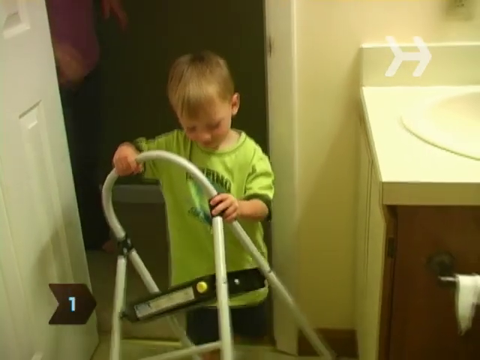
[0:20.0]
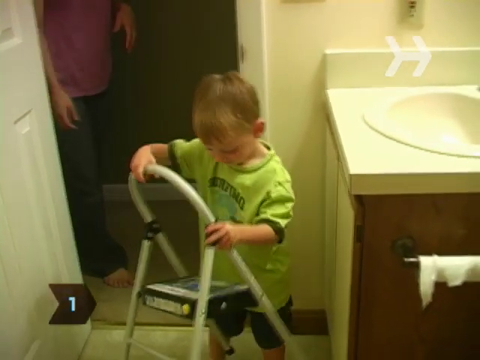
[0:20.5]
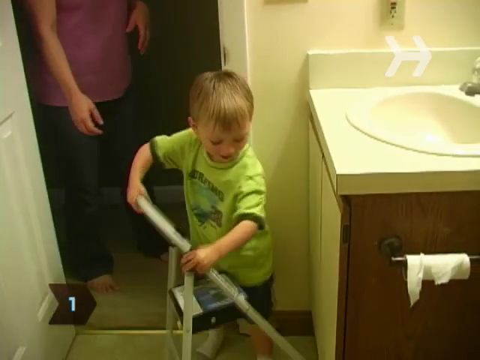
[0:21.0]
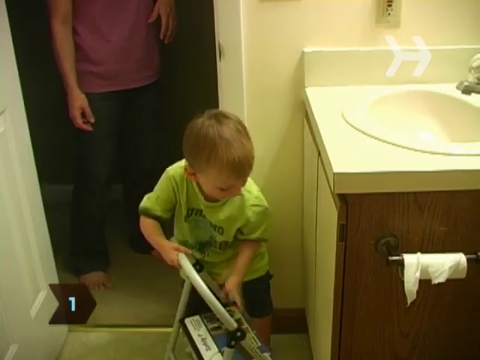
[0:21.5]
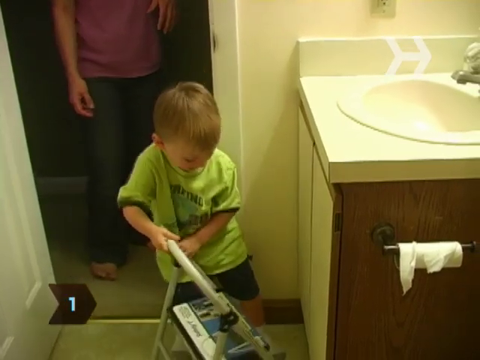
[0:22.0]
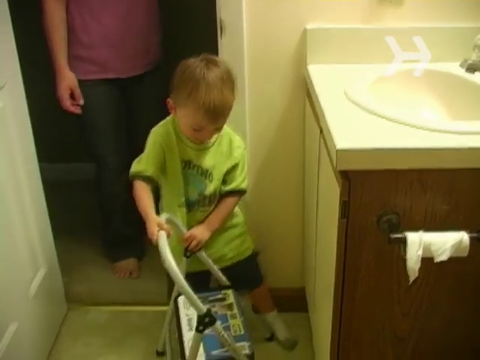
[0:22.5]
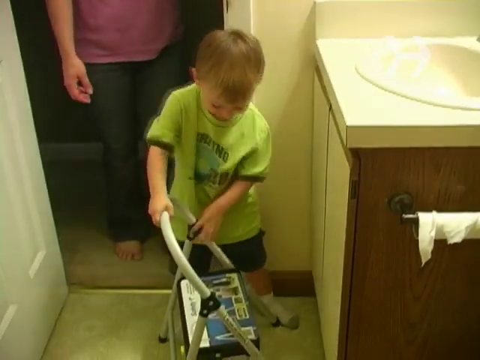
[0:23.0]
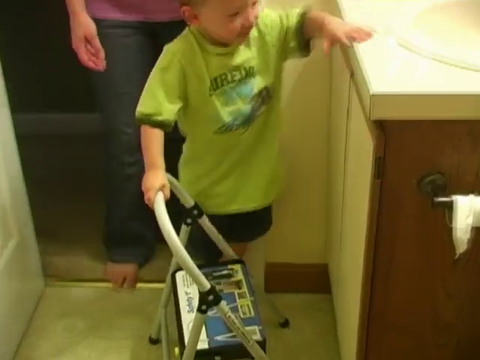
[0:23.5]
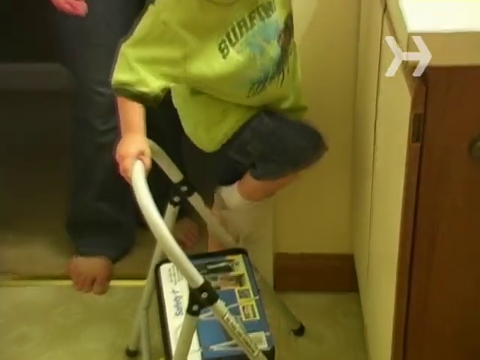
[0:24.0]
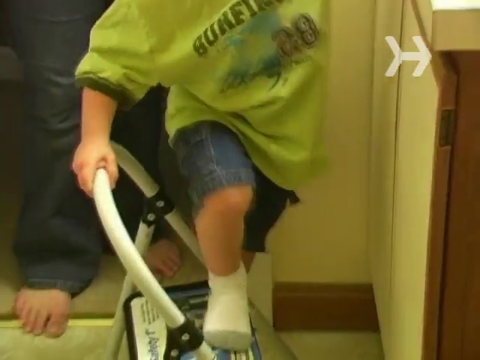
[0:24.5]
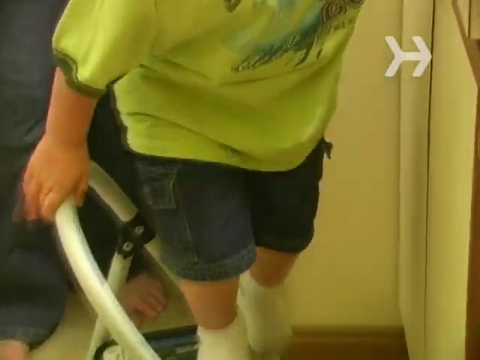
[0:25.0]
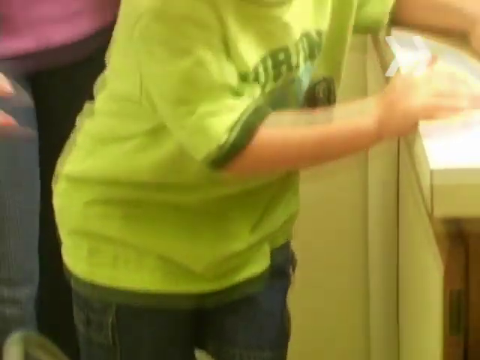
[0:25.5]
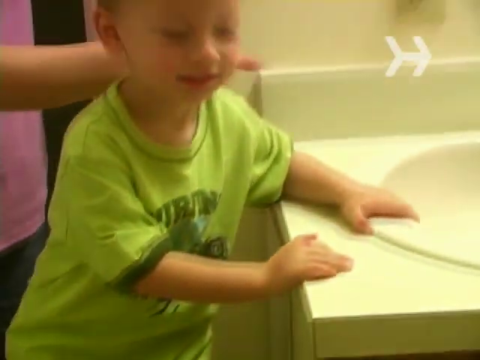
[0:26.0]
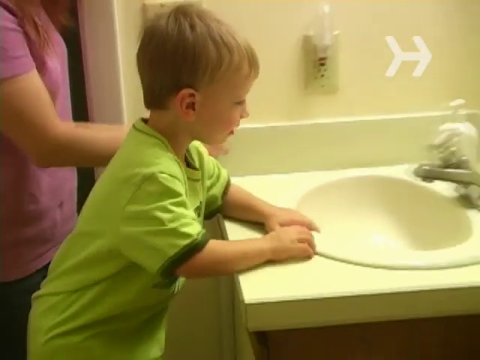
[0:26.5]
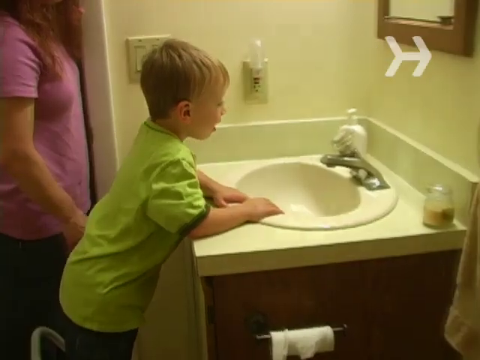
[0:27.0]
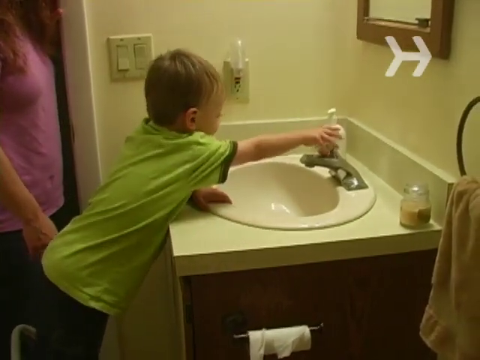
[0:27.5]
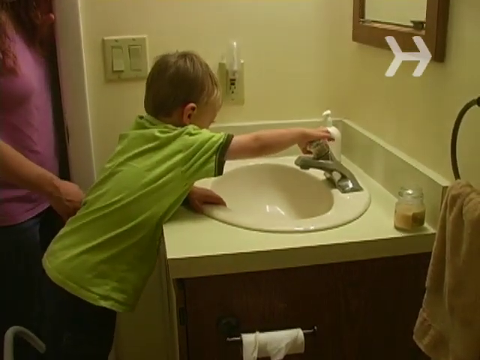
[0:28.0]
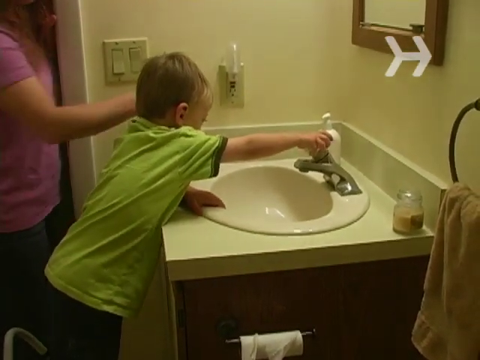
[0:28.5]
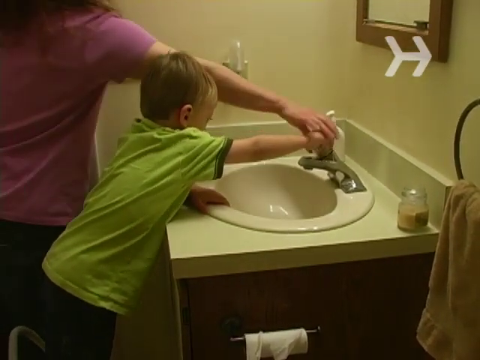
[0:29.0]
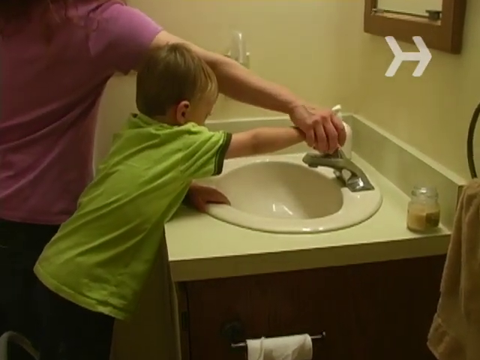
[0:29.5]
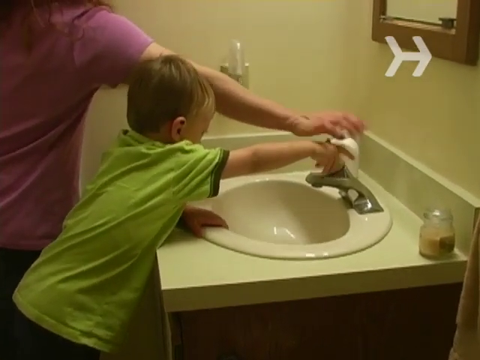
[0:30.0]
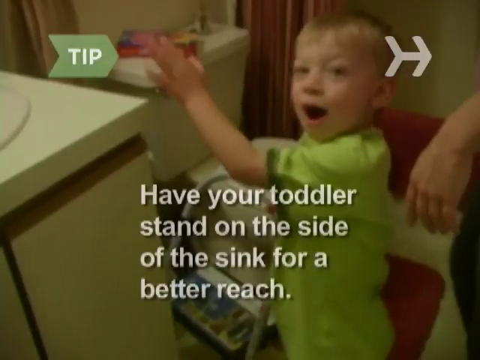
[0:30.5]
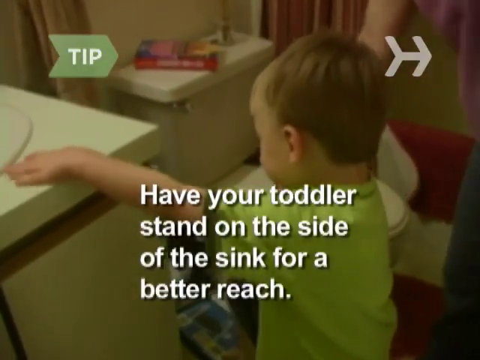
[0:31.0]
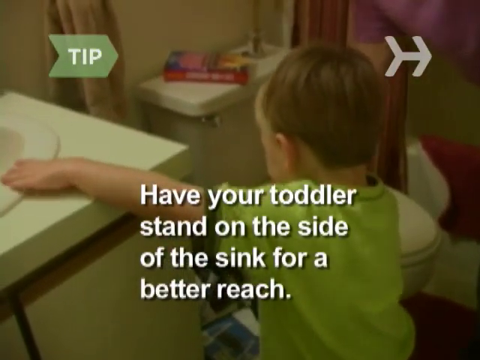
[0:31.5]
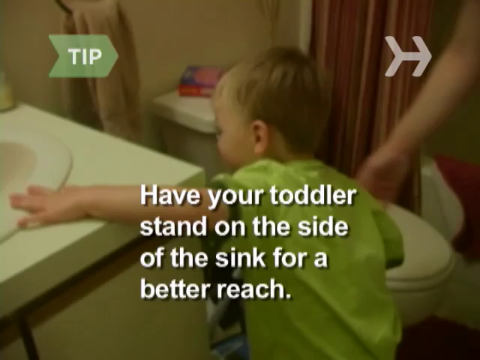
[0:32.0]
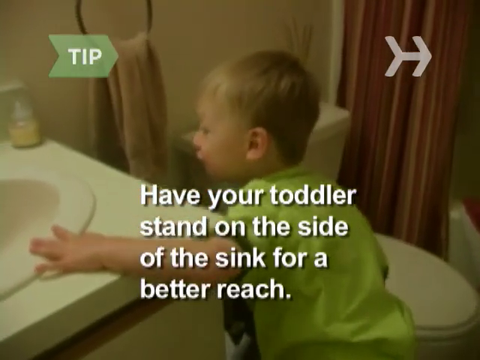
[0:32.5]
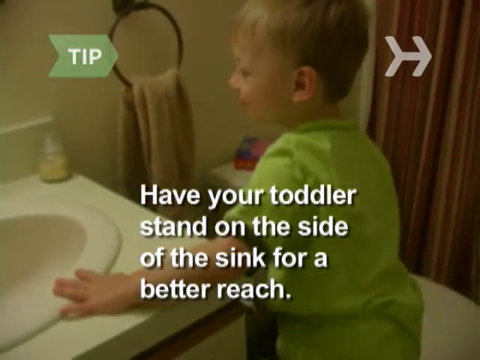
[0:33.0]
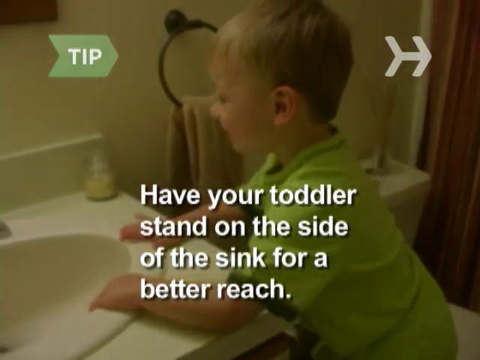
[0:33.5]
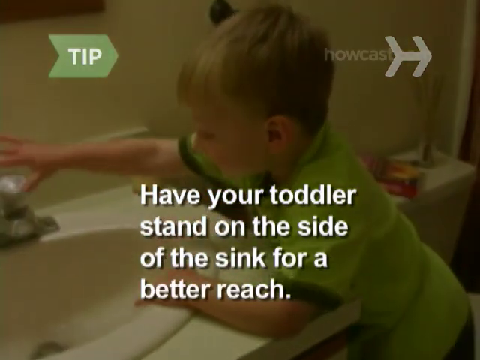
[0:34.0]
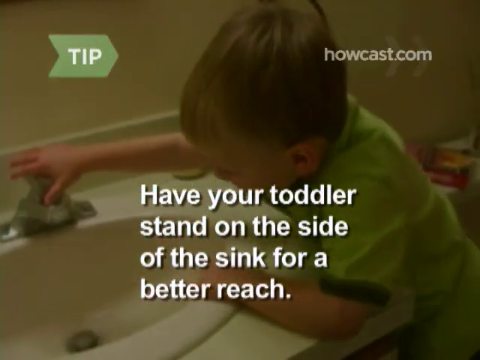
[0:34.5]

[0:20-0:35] The child walks up, puts the step stool in front of the sink, and reaches out trying to turn the water on. The faucet has a single twist-pull hot and cold control: a sort of crystal-looking plastic knob in the center that is pulled out and then twisted to alter the heat. The child has difficulty with it, and the mother's hand reaches in and points to get him to start. She wears a pink shirt and he wears a green t-shirt. He cannot reach, partly because the stool is placed so that his feet are several inches too far from the sink, and the mother reaches in. The step stool is then put between the sink and the toilet, and the child is able to reach the water. The water is on and he smiles.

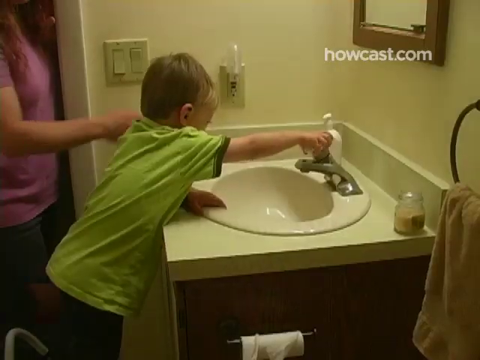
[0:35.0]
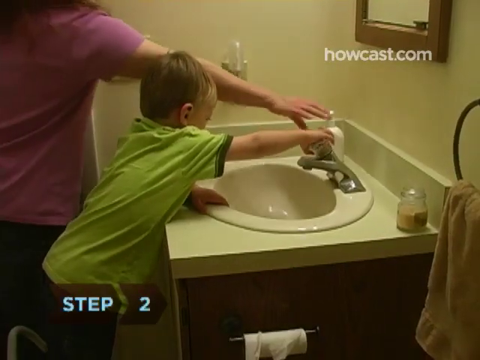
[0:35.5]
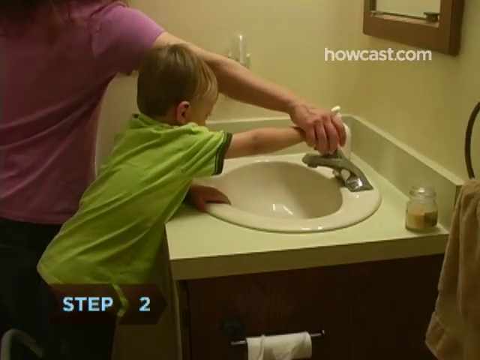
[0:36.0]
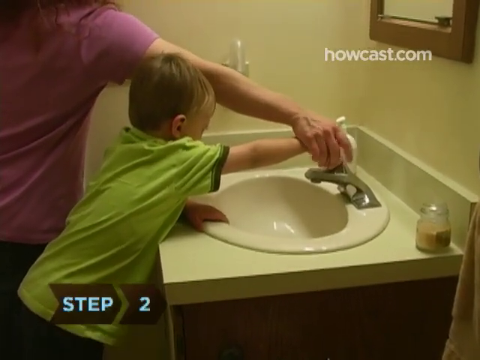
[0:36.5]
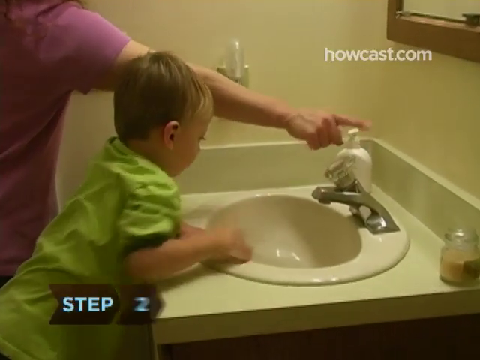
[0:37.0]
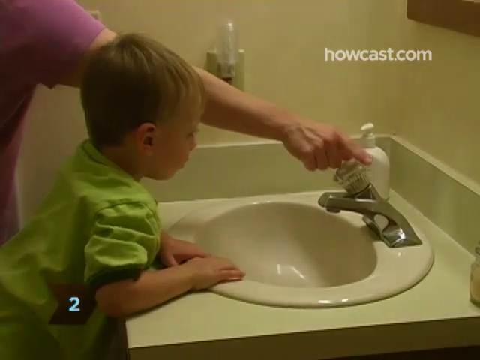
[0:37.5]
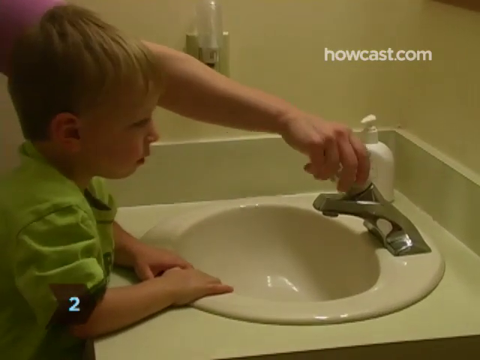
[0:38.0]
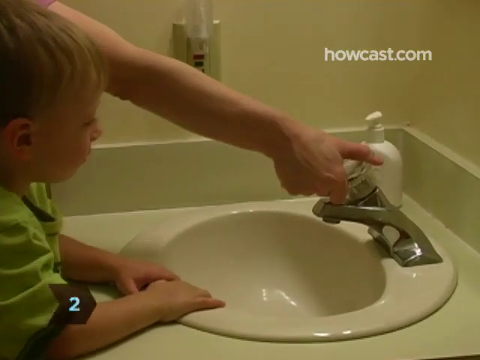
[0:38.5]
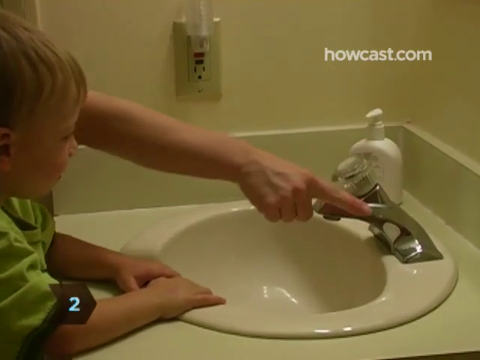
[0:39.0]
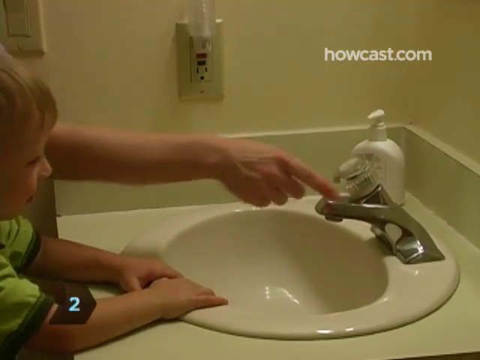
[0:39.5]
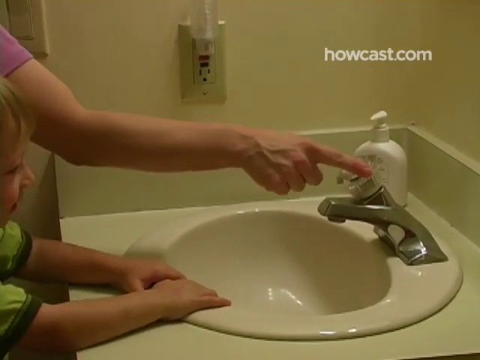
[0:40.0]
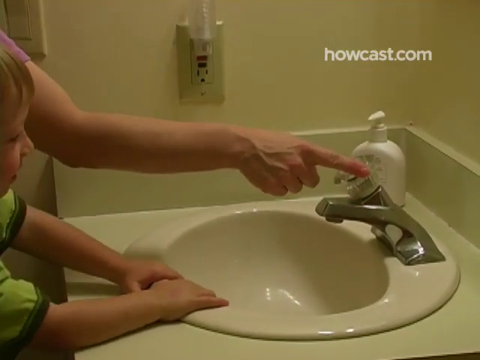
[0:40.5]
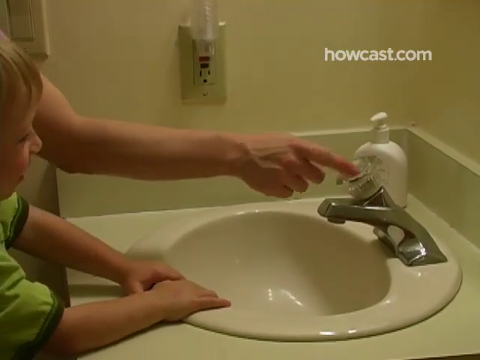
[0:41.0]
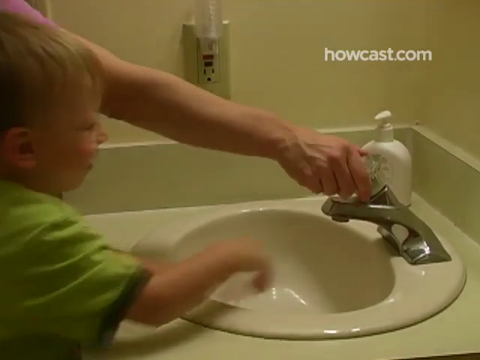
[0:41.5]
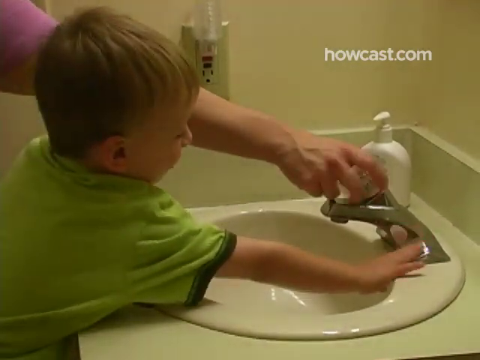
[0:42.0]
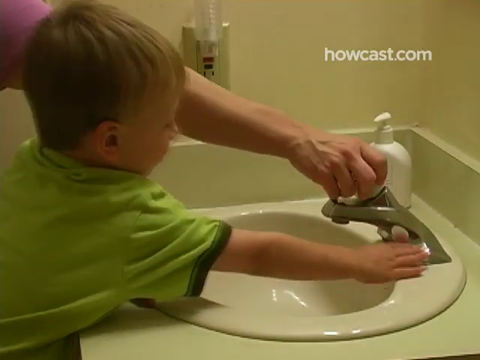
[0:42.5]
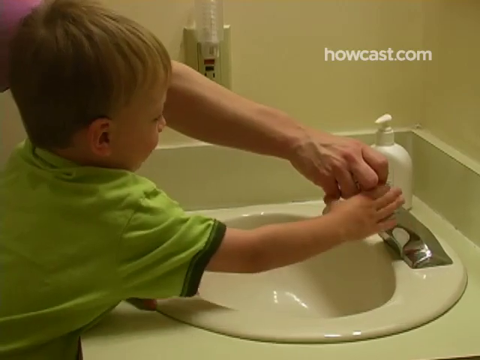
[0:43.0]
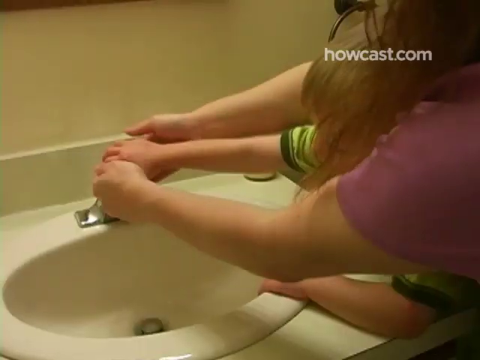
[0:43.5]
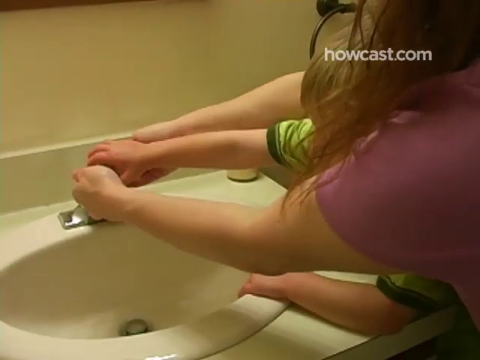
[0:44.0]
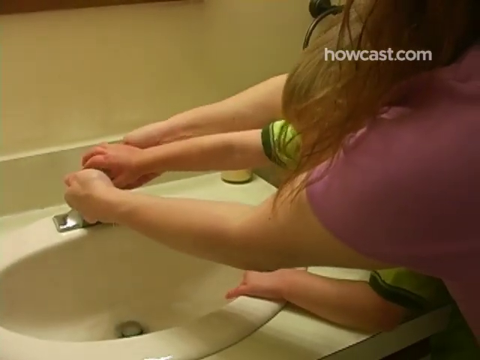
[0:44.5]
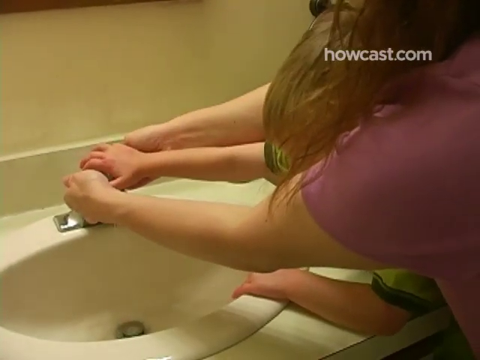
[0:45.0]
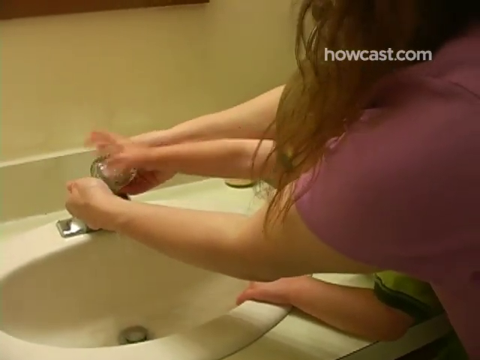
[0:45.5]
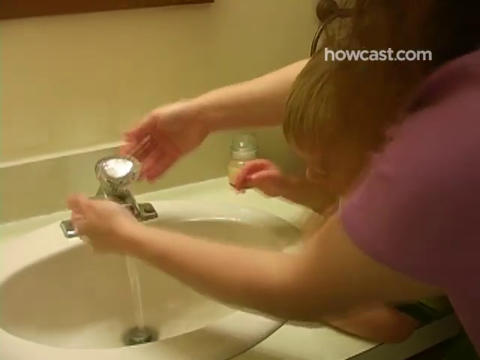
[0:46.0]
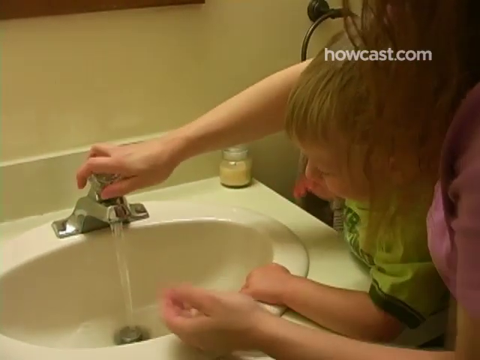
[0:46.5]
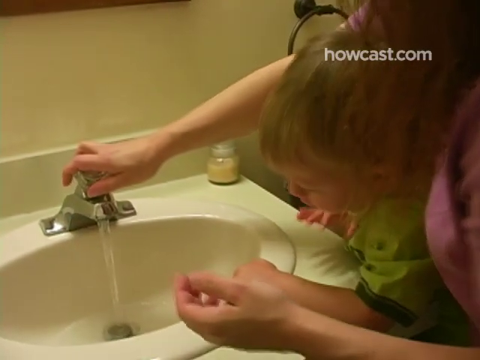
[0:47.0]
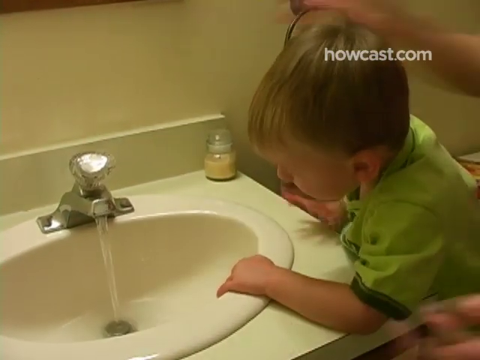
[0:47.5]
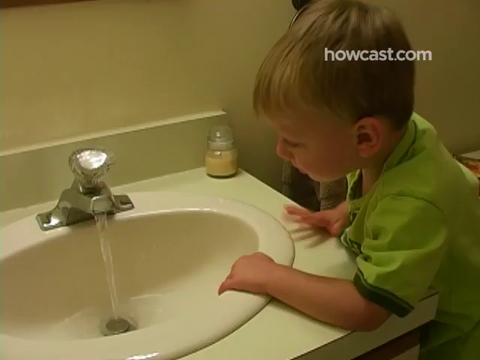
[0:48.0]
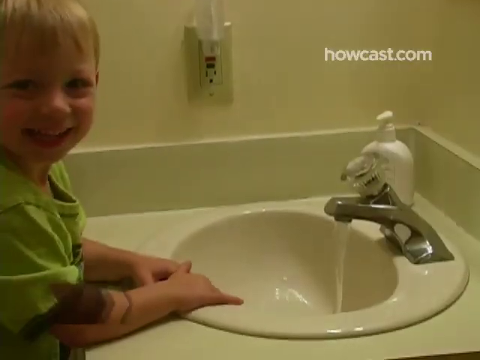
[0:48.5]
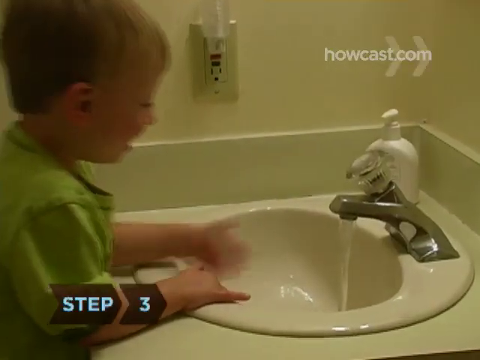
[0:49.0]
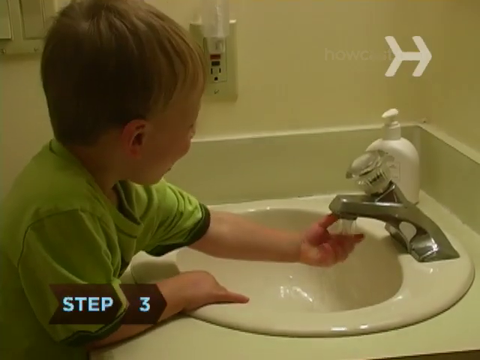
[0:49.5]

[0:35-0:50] As the child pulls the knob out to turn the water on, the mother quickly intercedes, stopping him and wagging her finger a little, then directs him to turn the knob towards the right, apparently to make sure cold water comes out. The child seems to understand. He reaches and touches the knob, looks at the water and smiles, then turns to whoever is filming and smiles broadly.